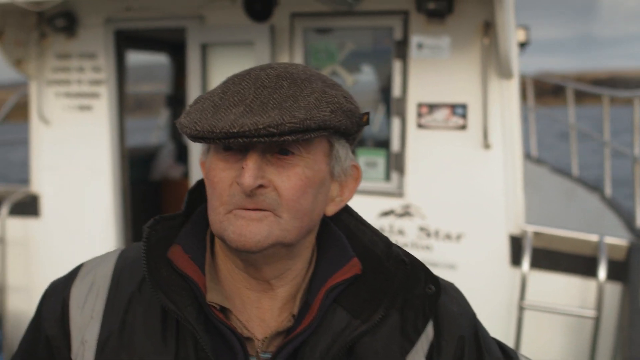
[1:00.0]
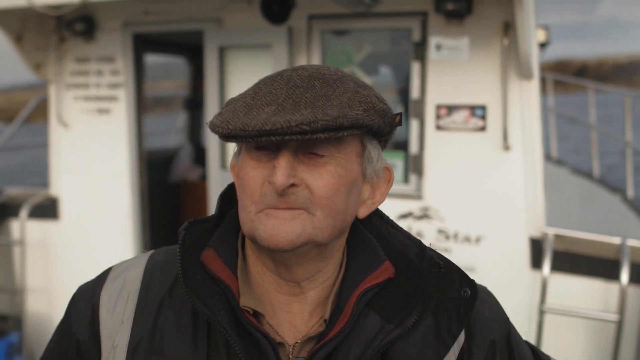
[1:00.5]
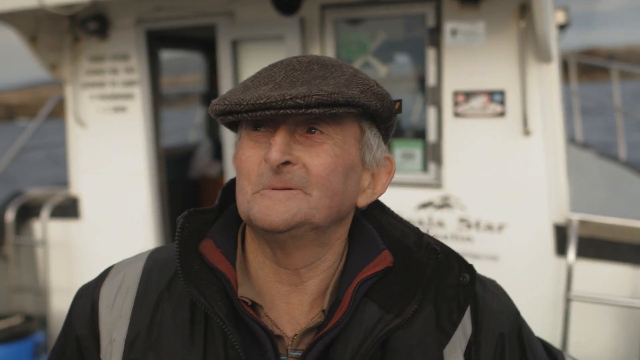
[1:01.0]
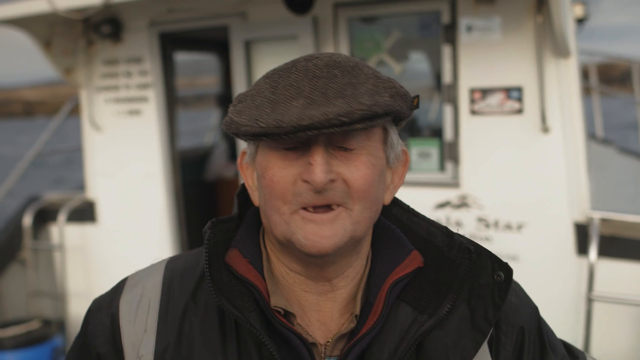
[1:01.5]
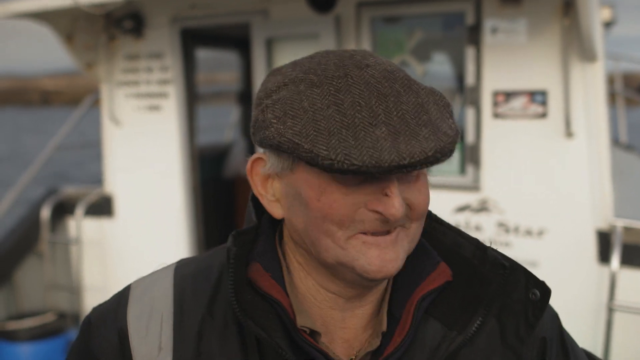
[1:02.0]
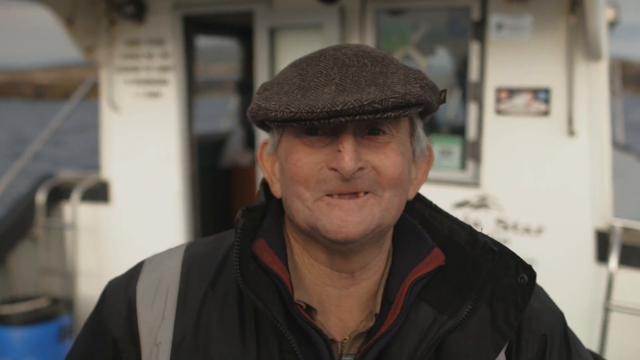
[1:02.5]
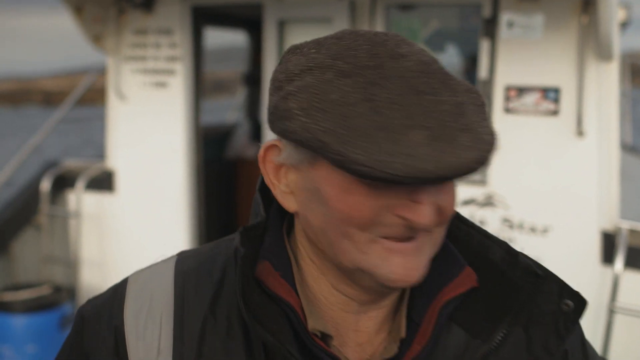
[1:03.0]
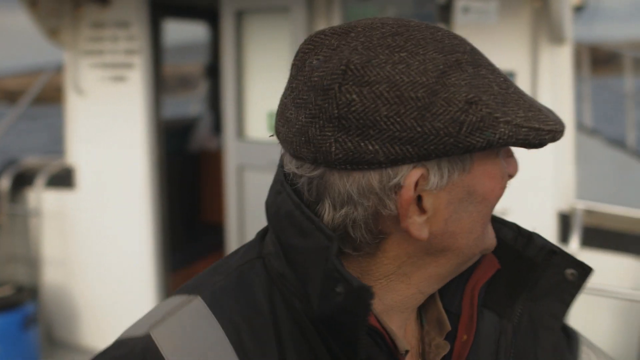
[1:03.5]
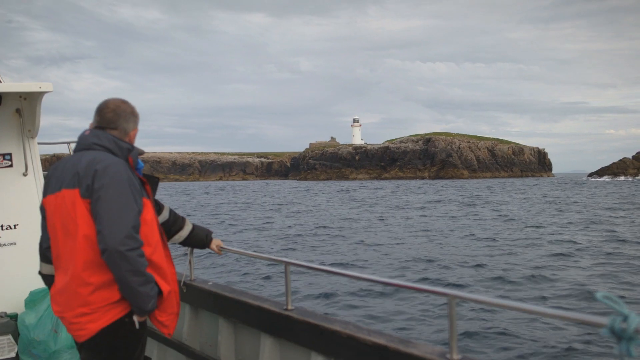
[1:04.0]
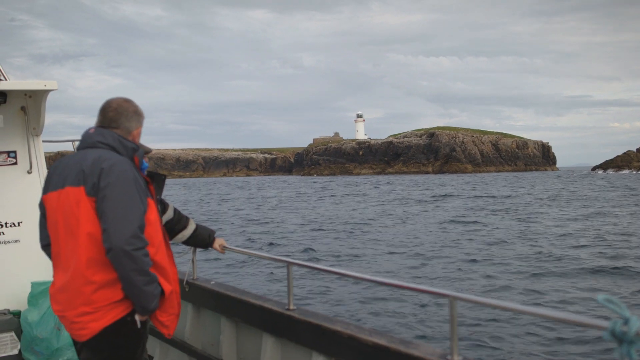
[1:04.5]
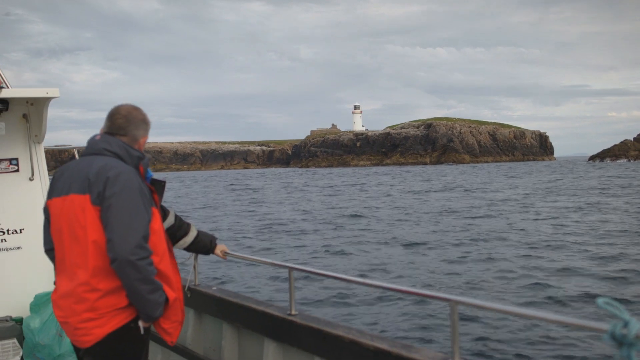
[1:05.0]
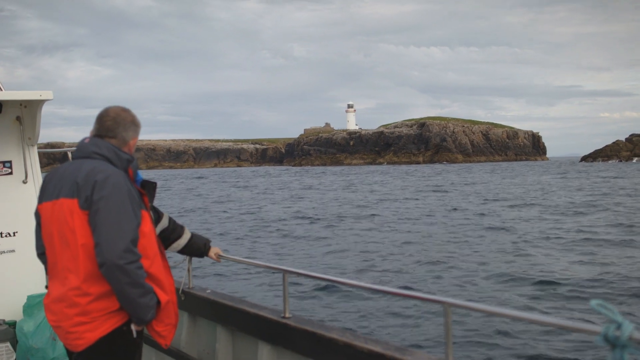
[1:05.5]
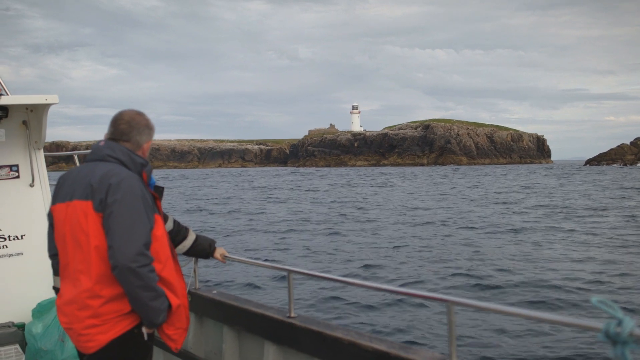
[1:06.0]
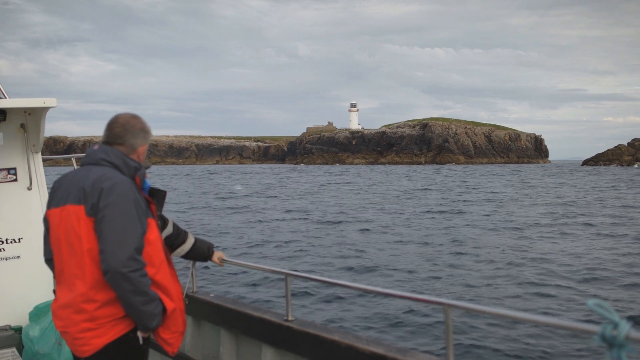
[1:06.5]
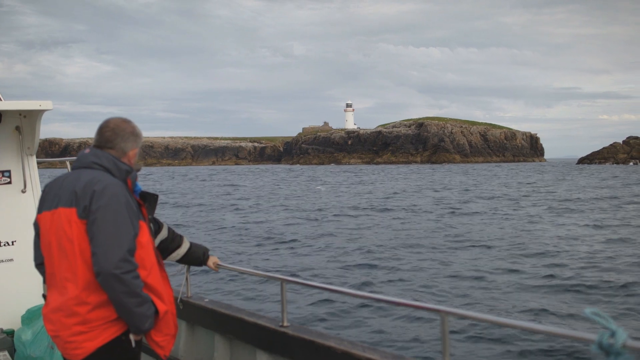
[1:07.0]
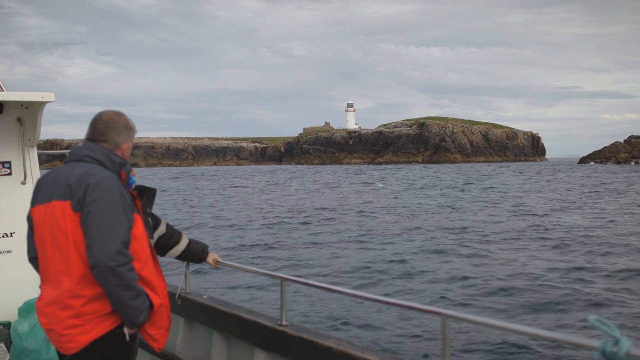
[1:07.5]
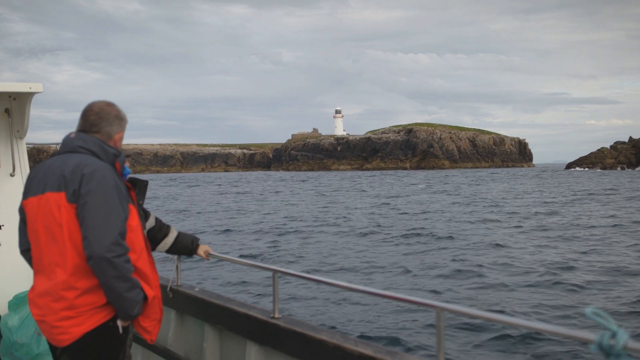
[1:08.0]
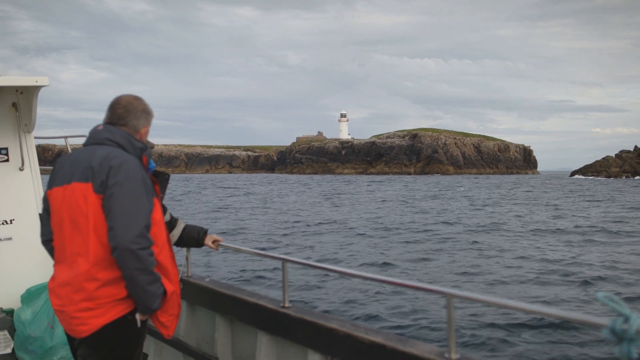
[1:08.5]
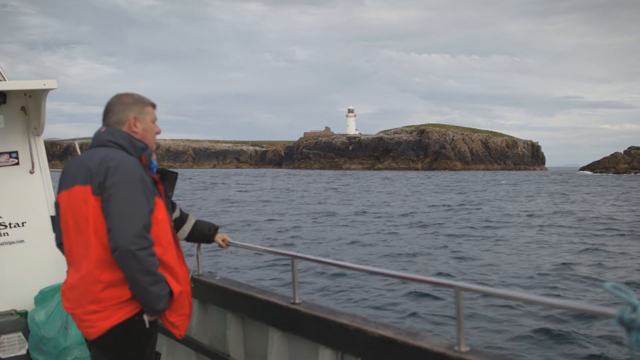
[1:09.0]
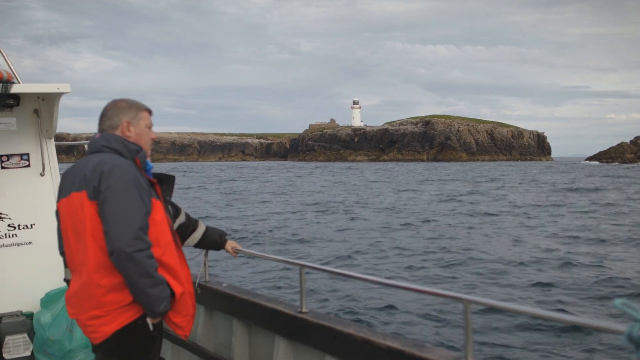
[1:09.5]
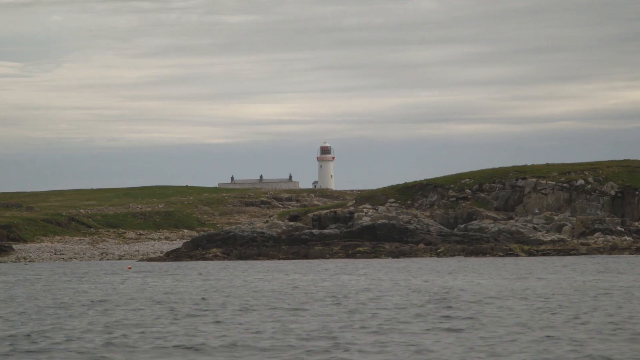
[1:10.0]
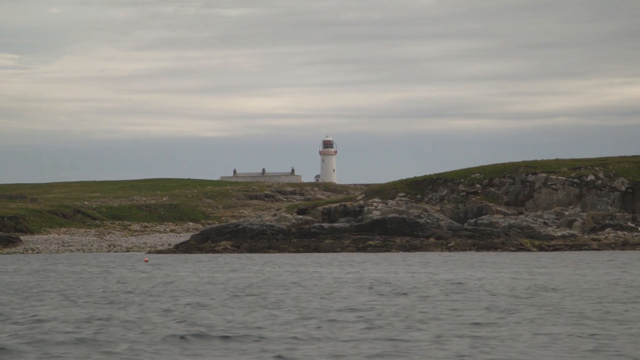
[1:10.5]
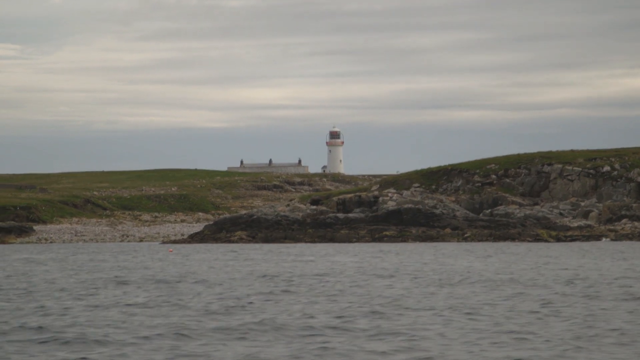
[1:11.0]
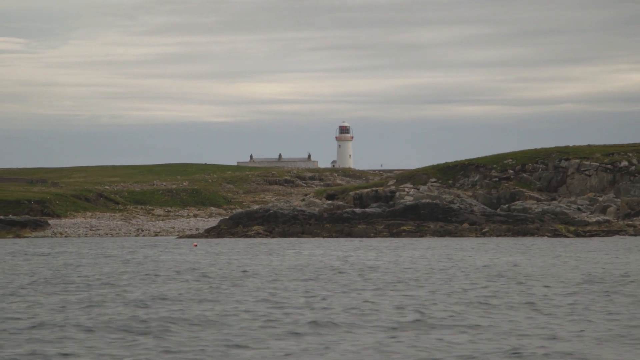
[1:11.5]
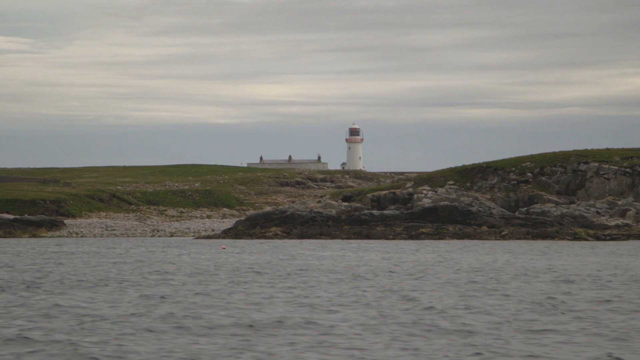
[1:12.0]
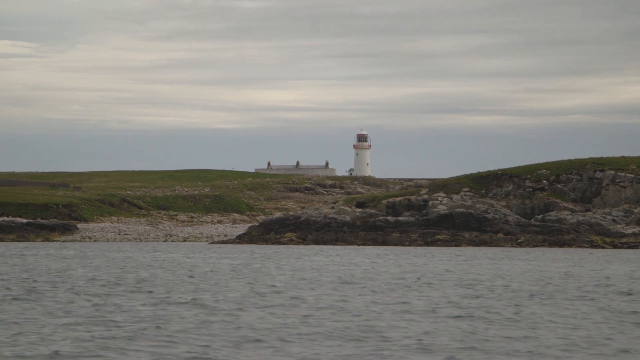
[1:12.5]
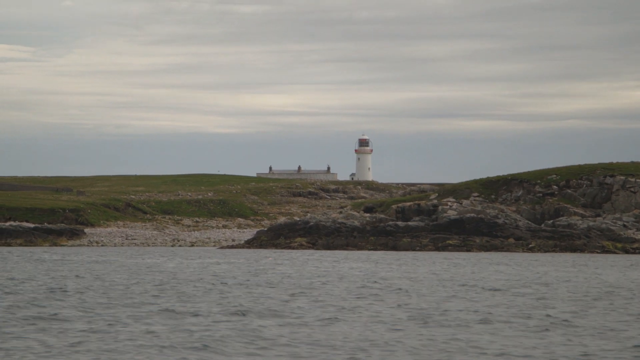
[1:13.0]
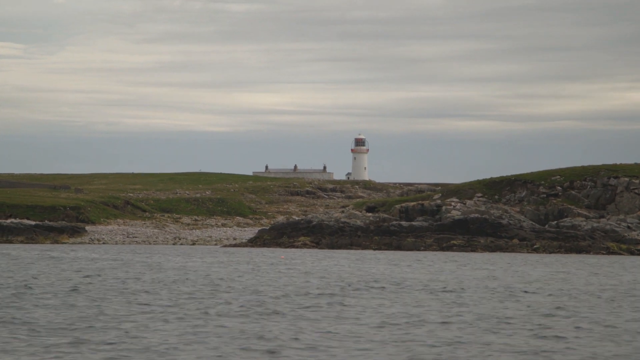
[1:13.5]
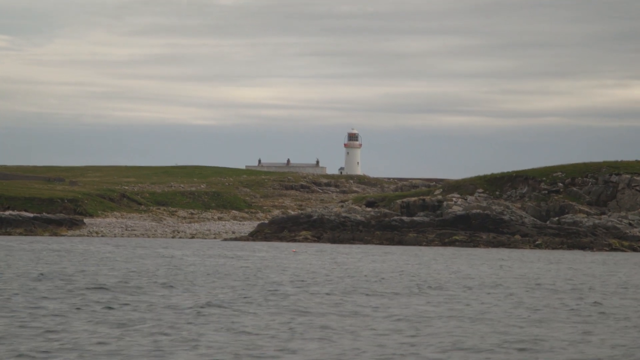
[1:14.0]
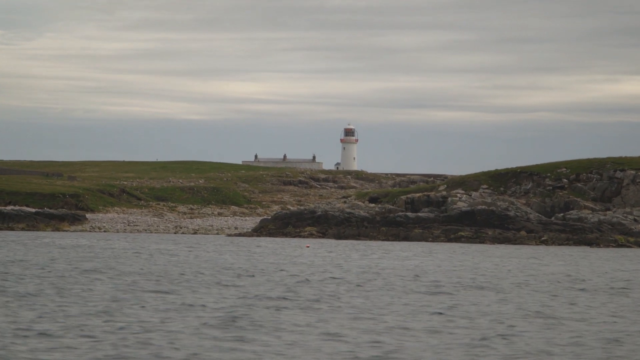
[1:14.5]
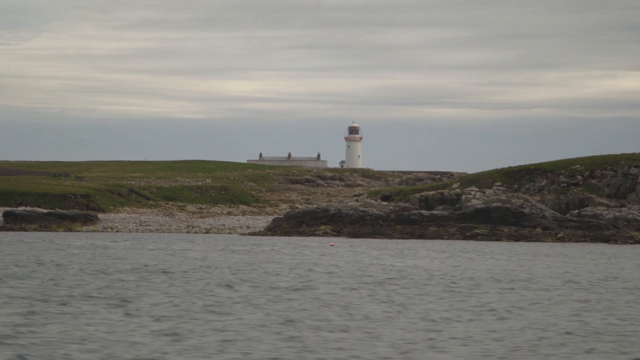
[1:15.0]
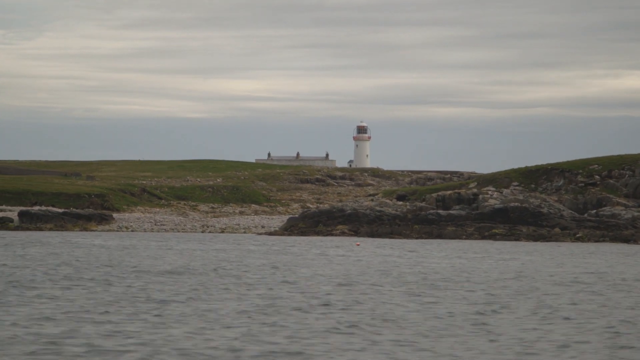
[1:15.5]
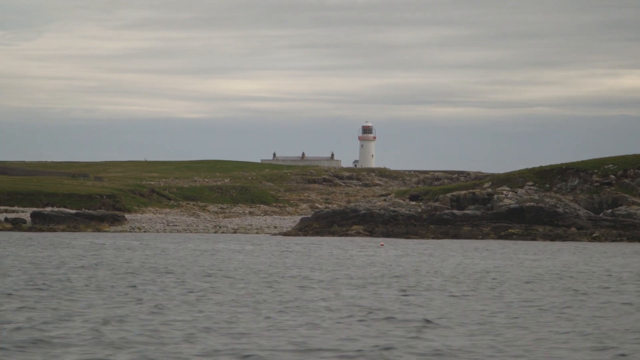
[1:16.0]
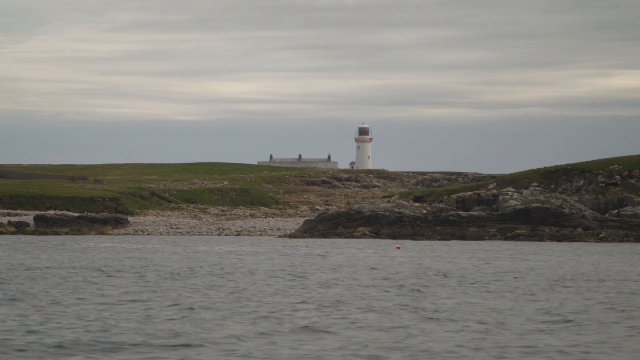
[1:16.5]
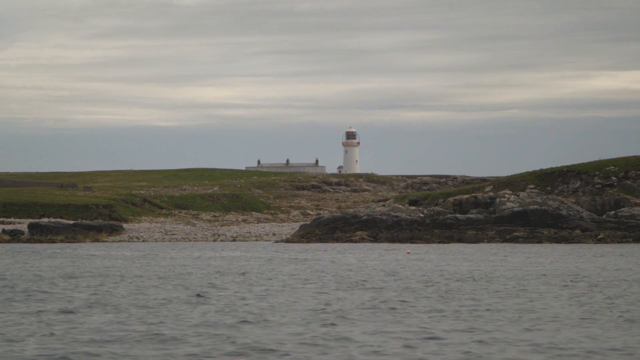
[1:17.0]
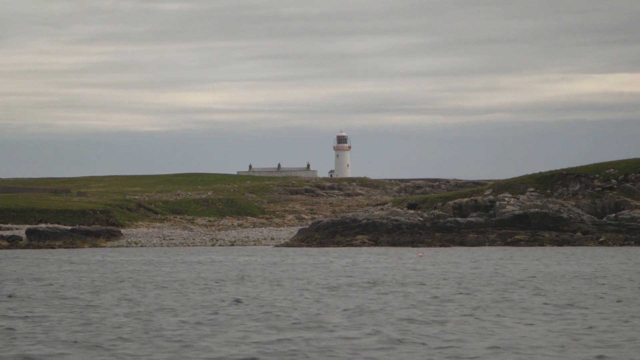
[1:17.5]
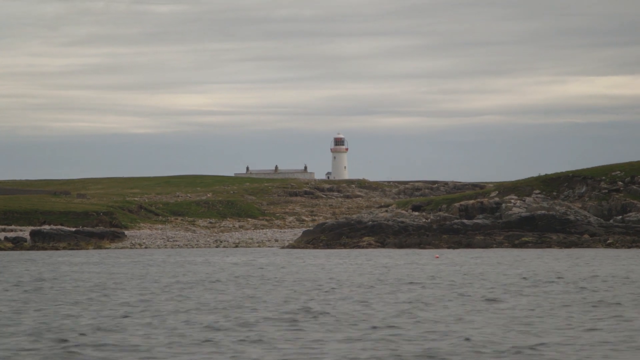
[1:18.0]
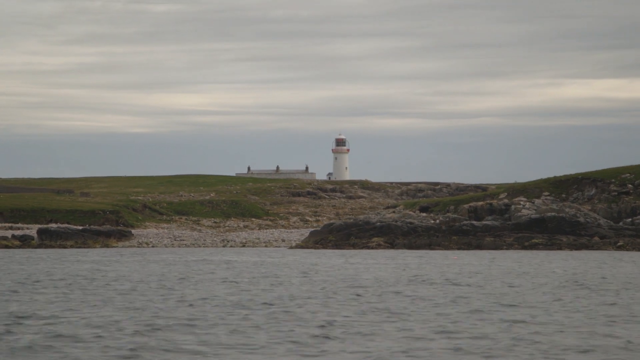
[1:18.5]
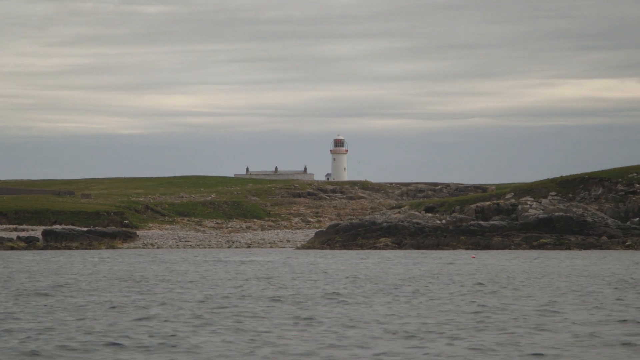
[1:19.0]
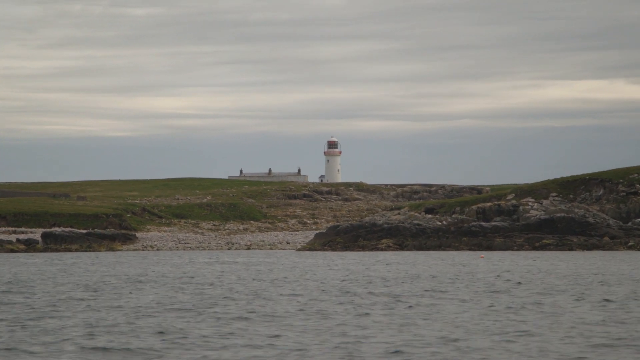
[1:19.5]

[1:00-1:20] The old man, apparently the captain of the vessel, is still talking. He has a few teeth missing and what looks like a mark on his nose, possibly some kind of wound. The men stare out at the lighthouse as they pass by on the sea. The lighthouse is white and very tall and is on top of a plateau with plenty of grass; there appears to be a rocky shore leading up to the top of the plateau, where it is flat. The sky overhead looks like there may be a storm on the way.